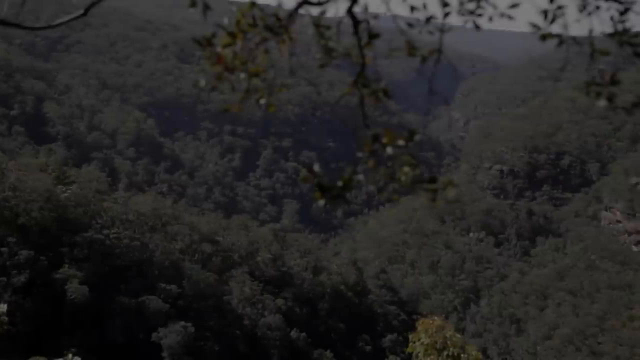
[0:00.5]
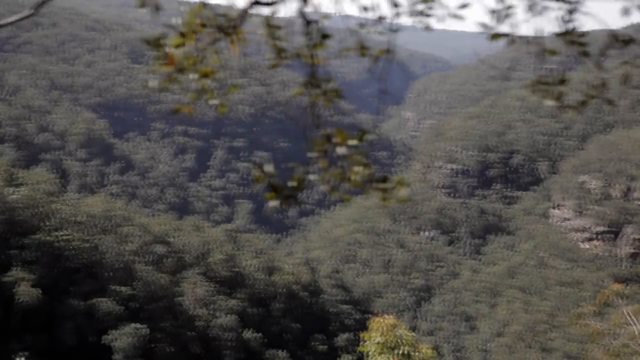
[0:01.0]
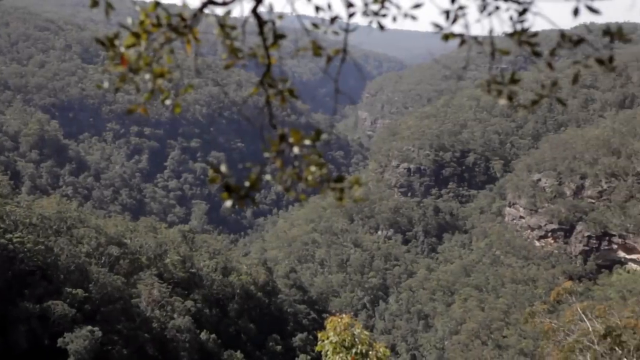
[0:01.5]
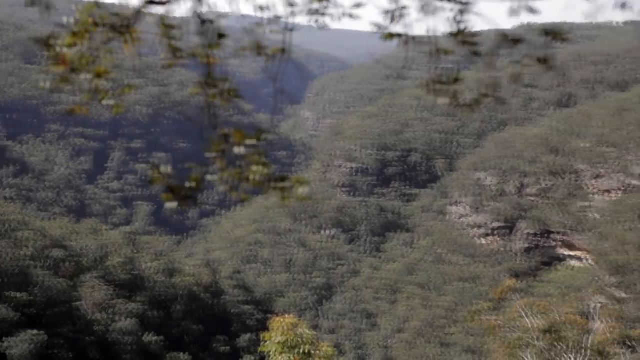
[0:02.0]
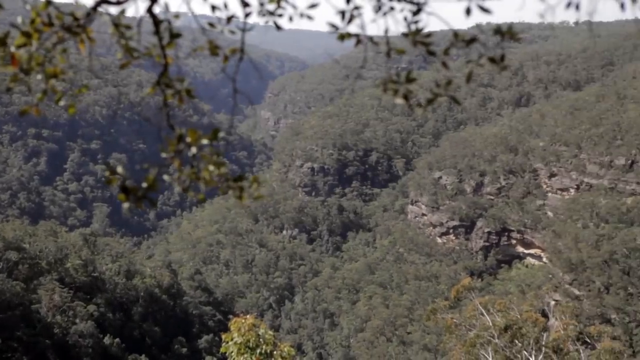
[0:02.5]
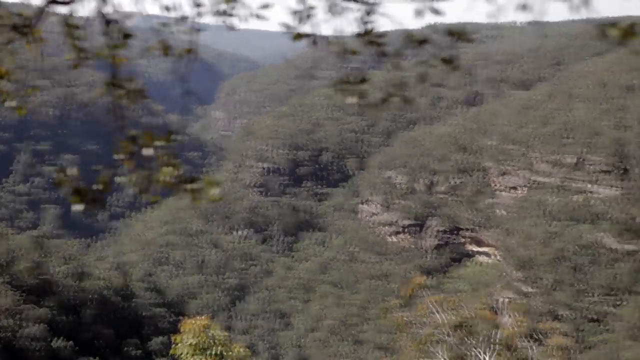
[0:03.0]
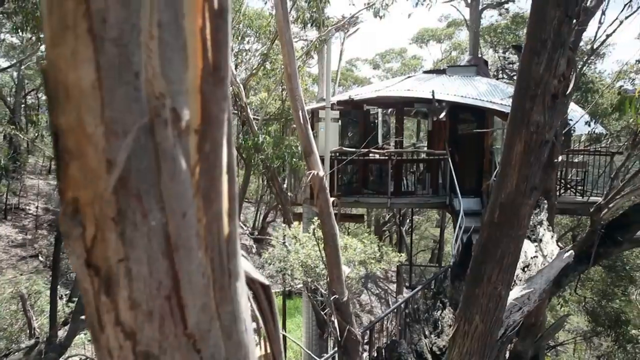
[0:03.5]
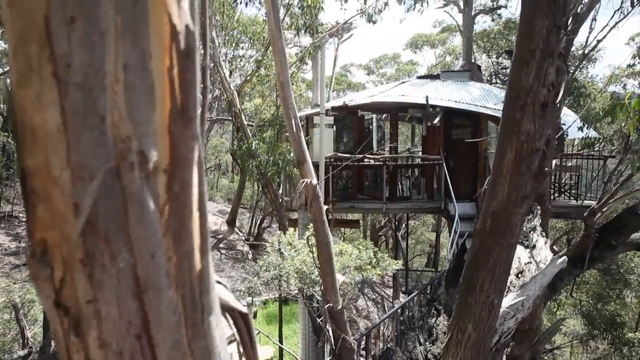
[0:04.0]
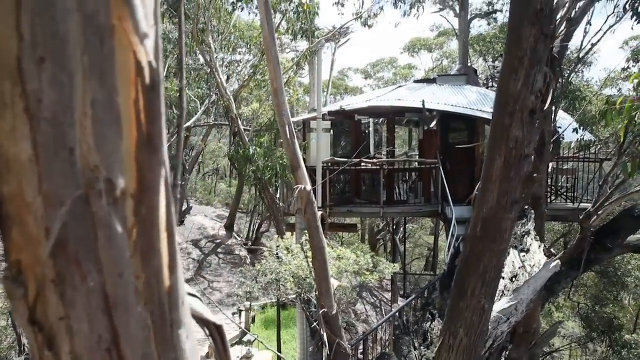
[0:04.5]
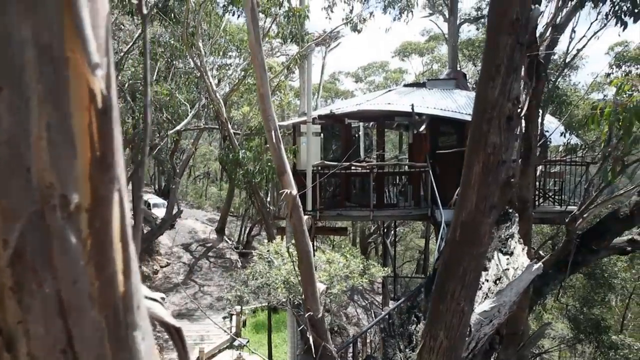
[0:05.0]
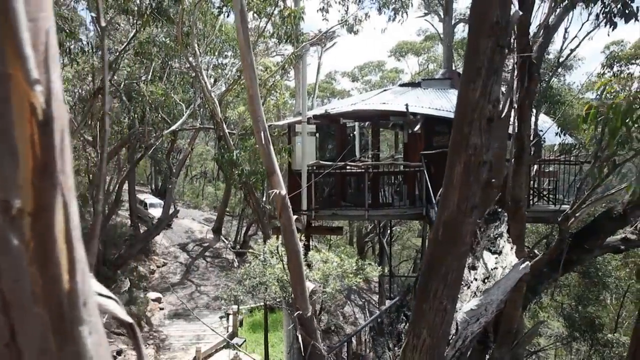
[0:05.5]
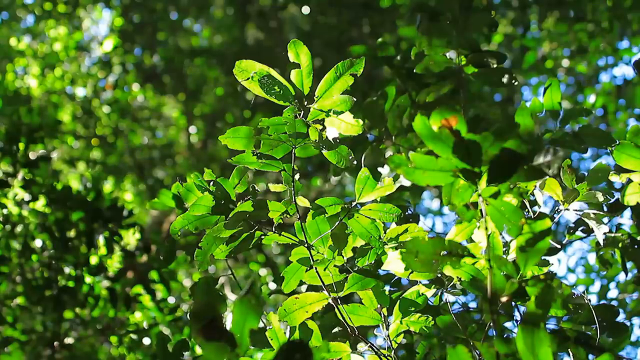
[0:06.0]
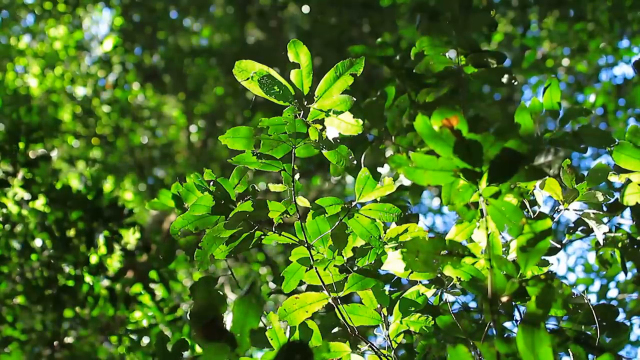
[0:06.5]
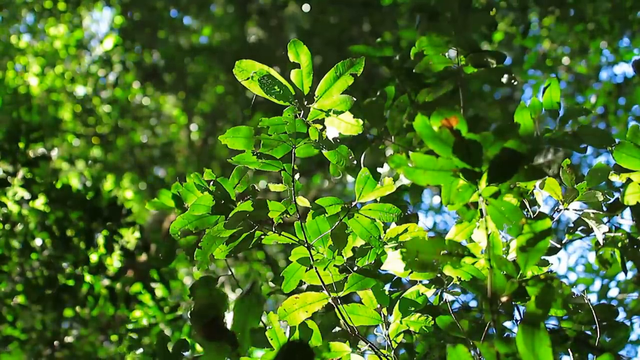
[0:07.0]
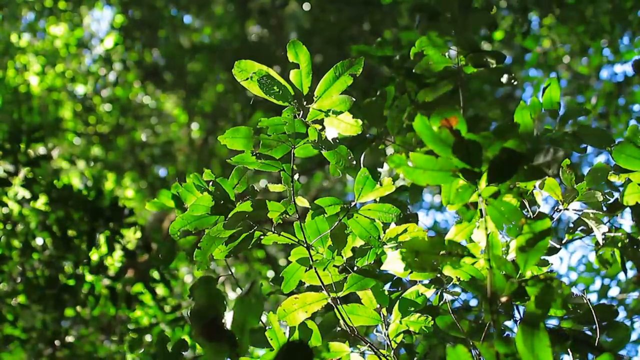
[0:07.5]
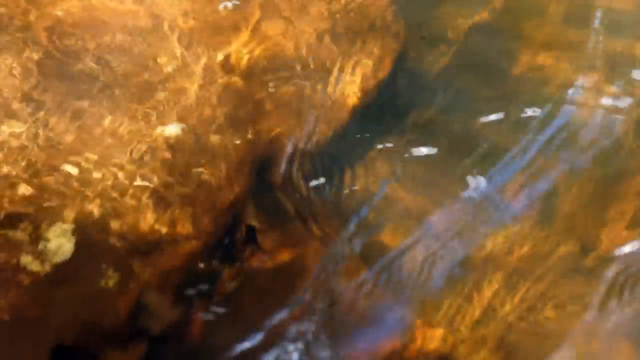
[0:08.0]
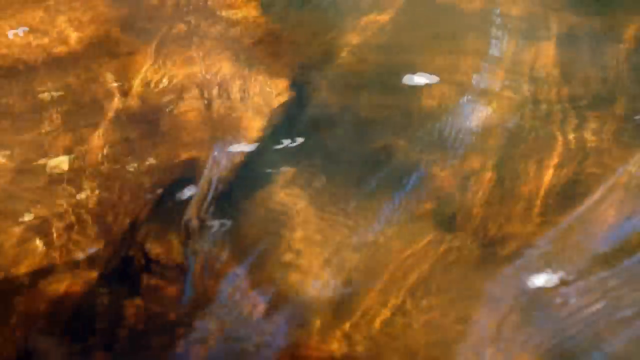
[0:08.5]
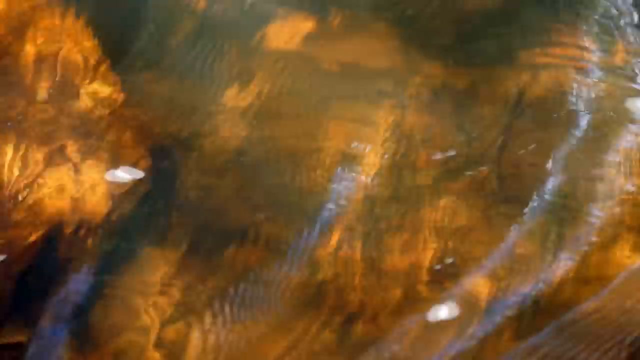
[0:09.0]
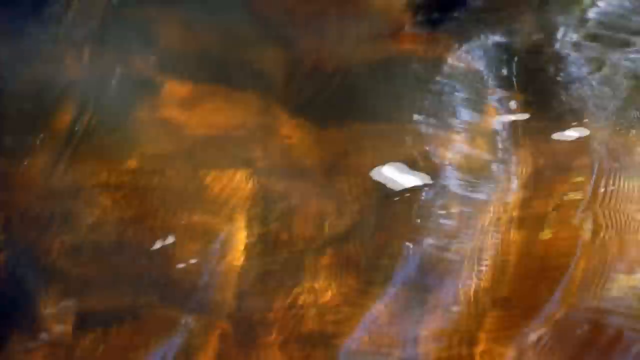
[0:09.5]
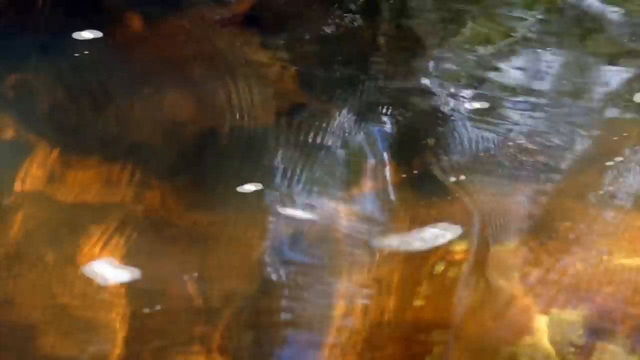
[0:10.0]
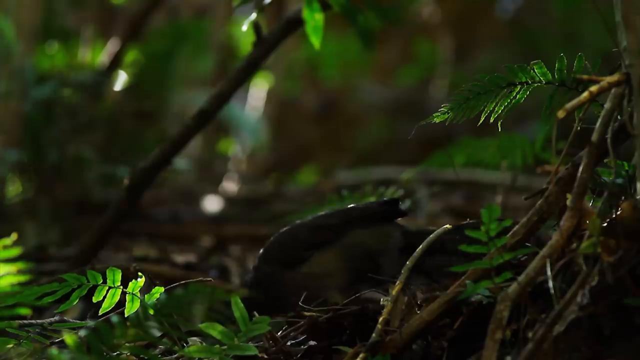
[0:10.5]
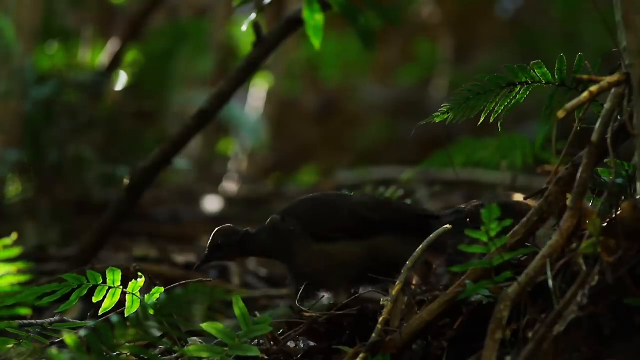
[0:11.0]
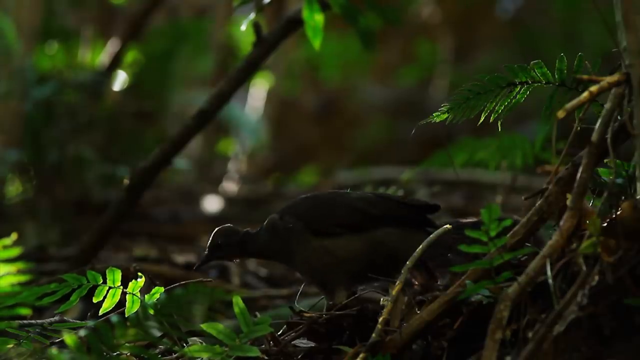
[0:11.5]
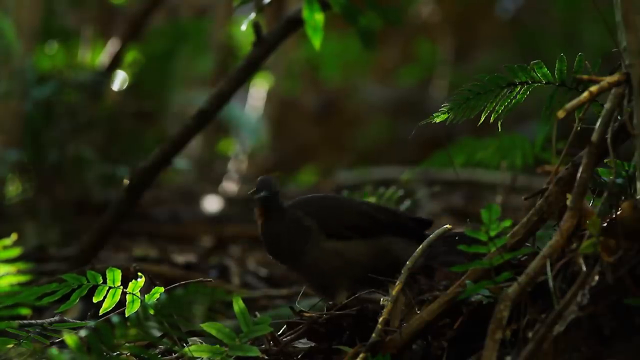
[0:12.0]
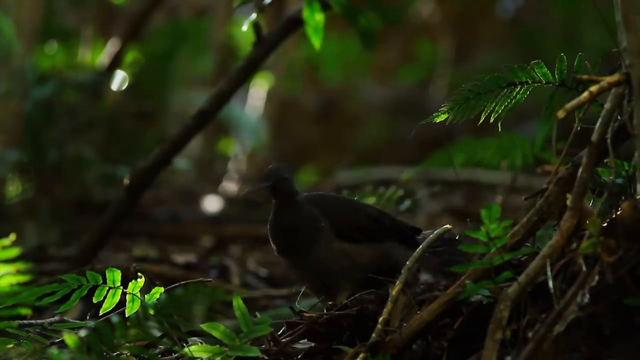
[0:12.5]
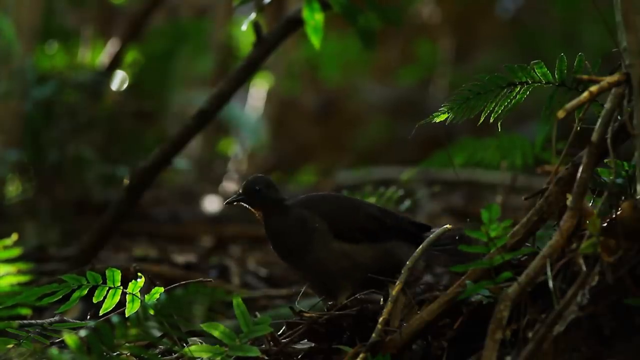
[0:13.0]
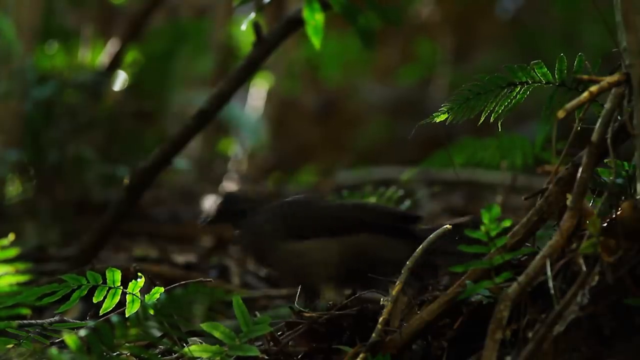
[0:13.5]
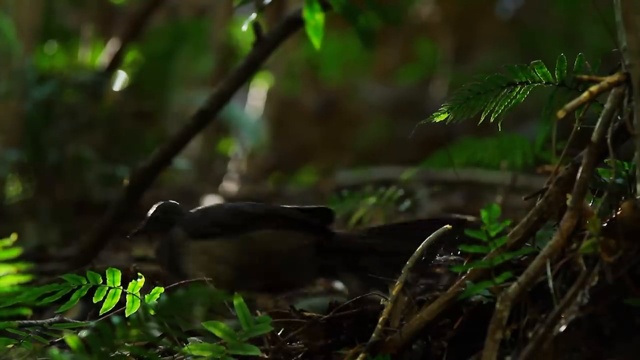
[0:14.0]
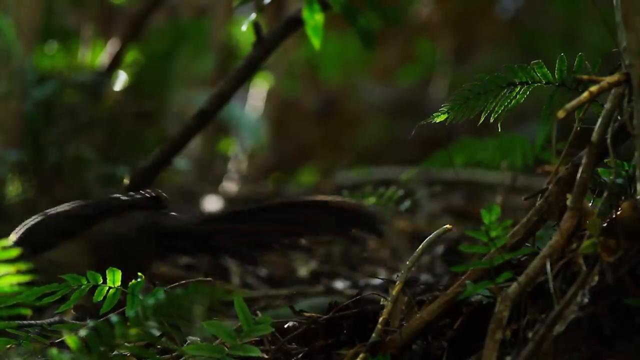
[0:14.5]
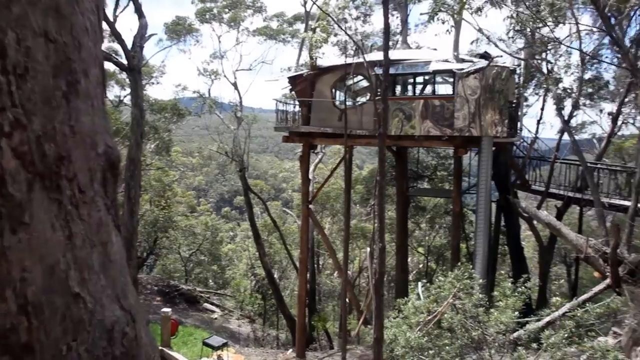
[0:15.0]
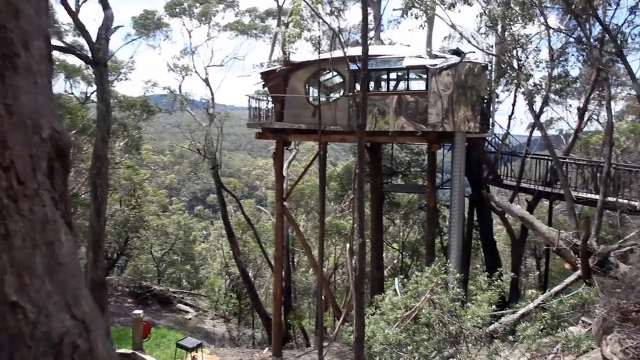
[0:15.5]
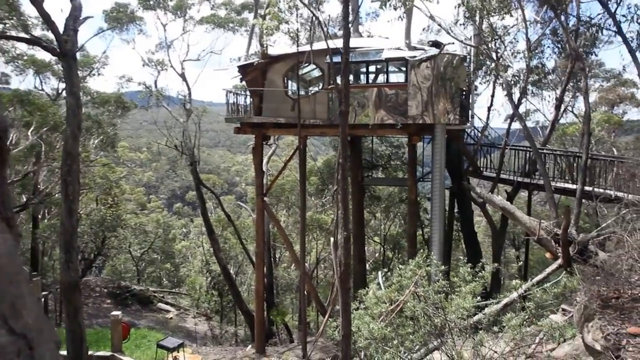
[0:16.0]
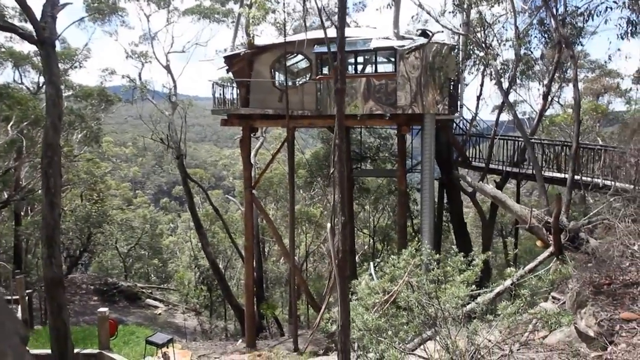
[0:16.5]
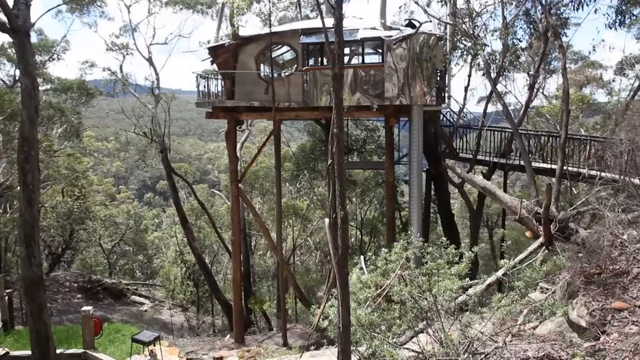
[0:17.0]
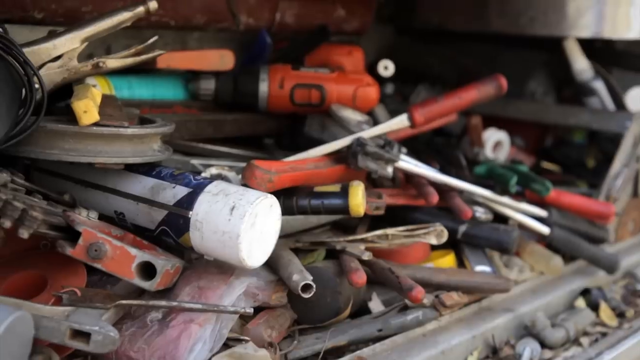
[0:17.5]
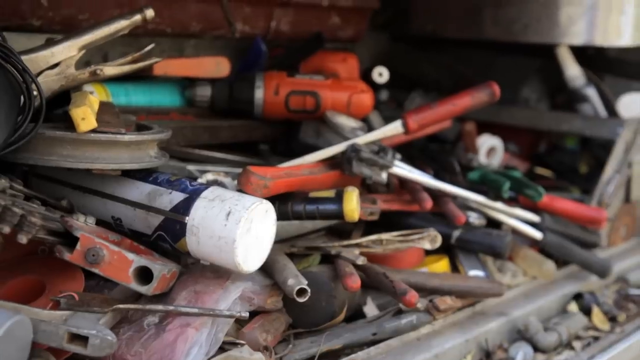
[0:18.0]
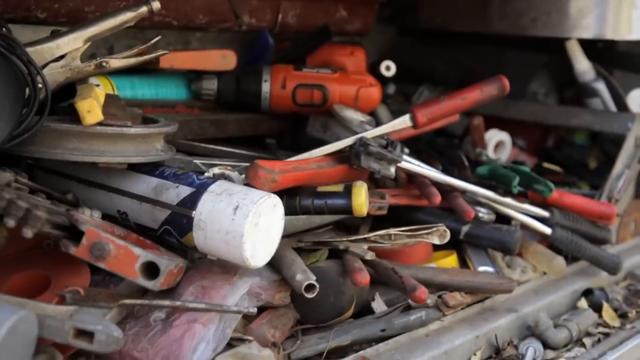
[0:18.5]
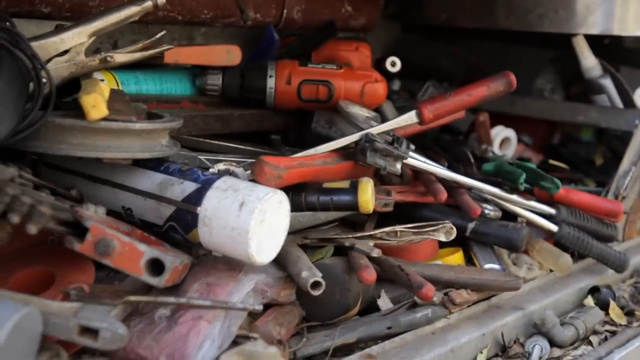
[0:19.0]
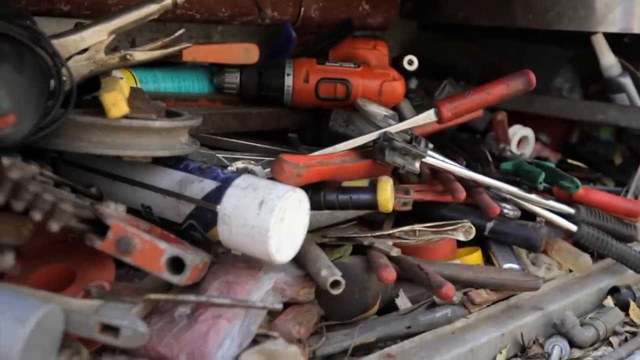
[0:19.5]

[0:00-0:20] The video appears to be nature footage. A shot pans from left to right across a mountain area, then cuts to what looks like a treehouse in the middle of this mountain area, partly visible behind a bunch of branches. Windows, a door and some stairs leading up to the treehouse can be seen, along with green plants that sway slightly in the wind. The footage cuts to what looks like a steady stream with some foam or something on top of the water, flowing from right to left. A bird is seen from the side; it appears to be on the ground, poking around. It turns toward the camera, turns back toward the left, and walks away to the left. The video then cuts back to what looks like the side of the treehouse, where a walkway leads to it; the walkway appears to be hanging, built off to the side, and a large post sticks up. The treehouse appears to be really high up.